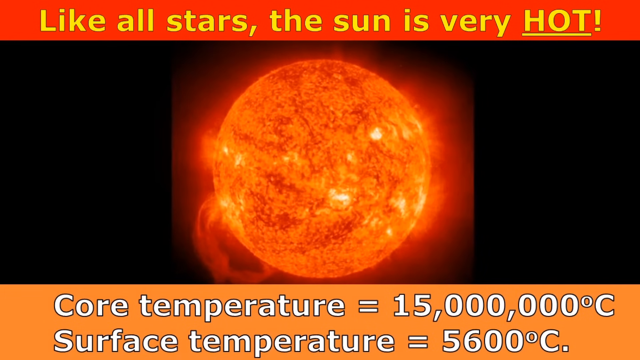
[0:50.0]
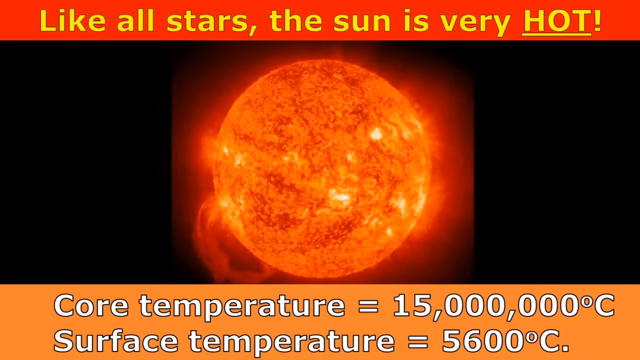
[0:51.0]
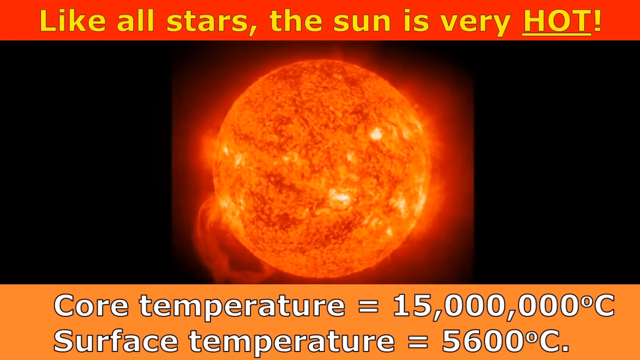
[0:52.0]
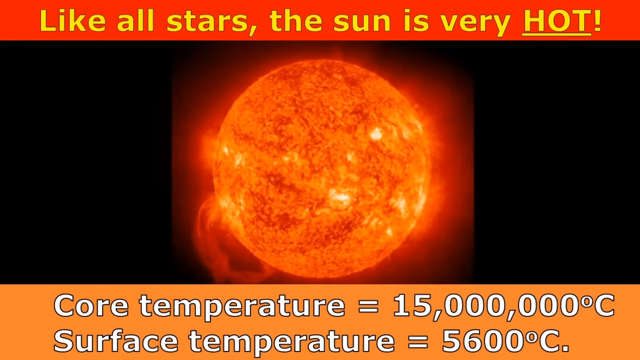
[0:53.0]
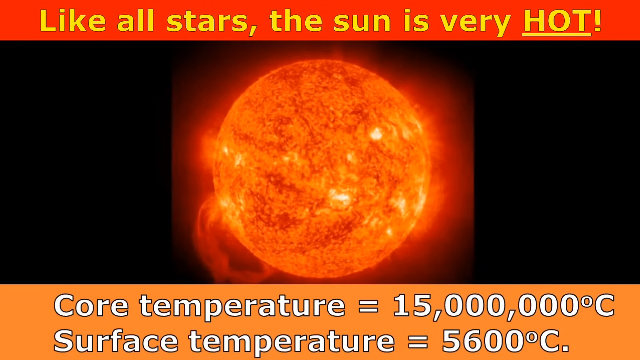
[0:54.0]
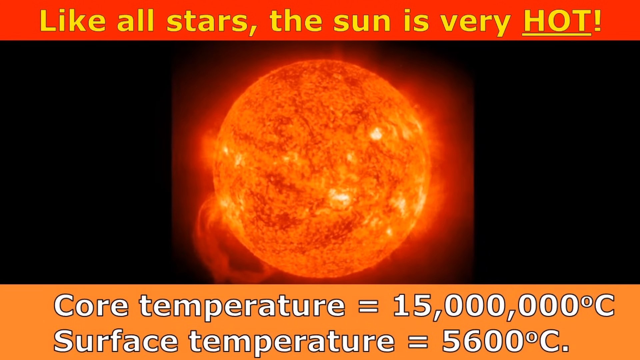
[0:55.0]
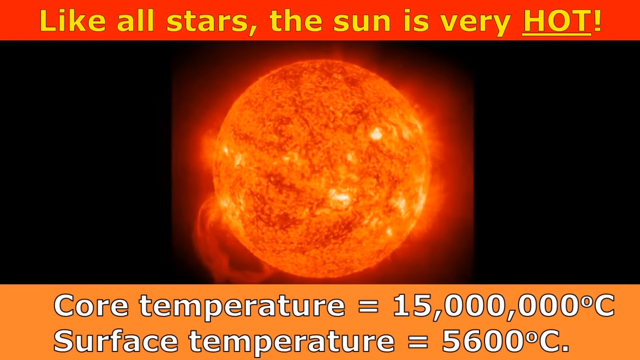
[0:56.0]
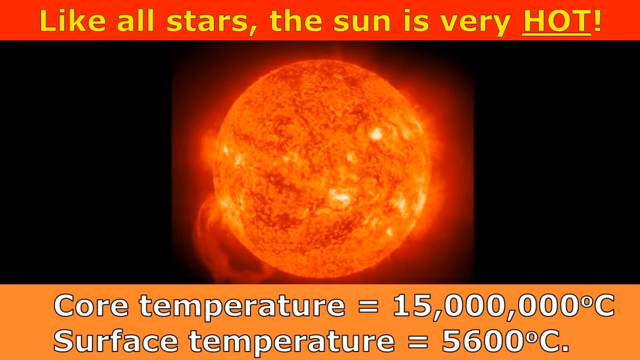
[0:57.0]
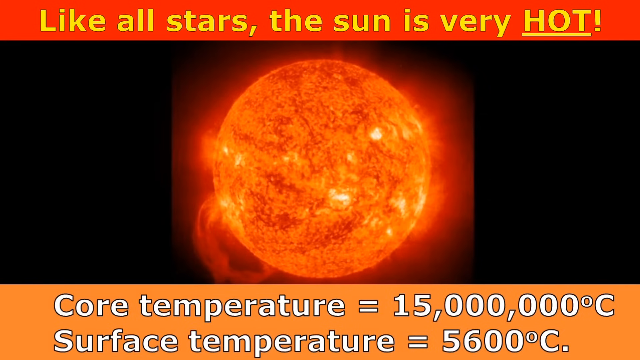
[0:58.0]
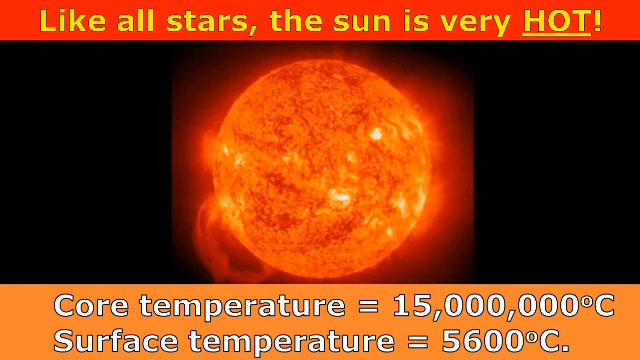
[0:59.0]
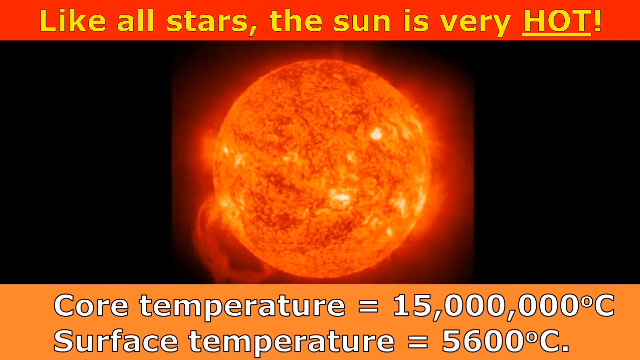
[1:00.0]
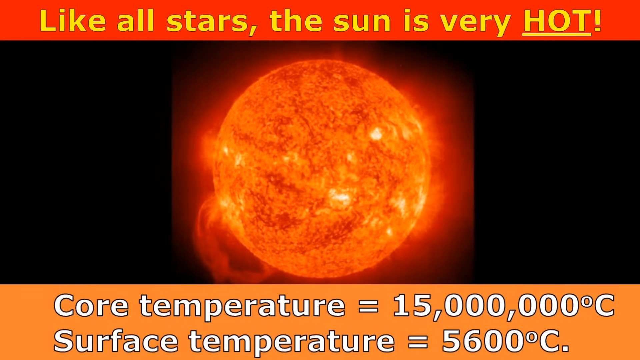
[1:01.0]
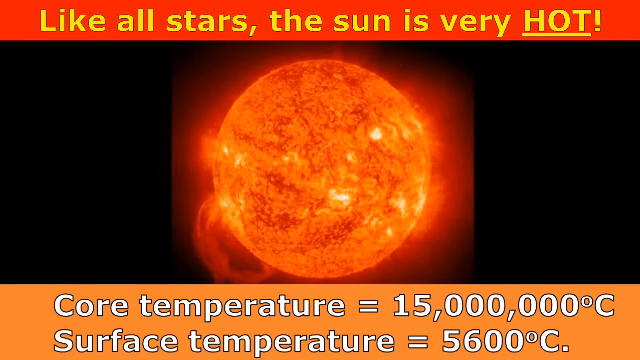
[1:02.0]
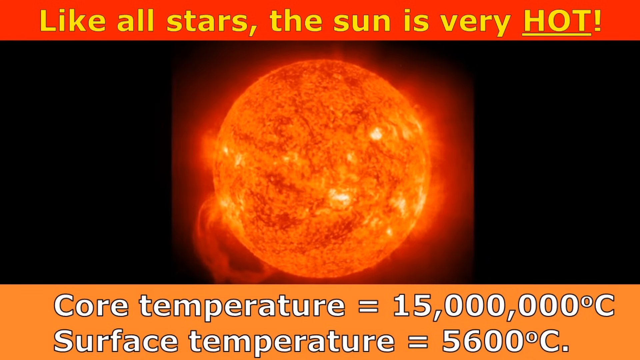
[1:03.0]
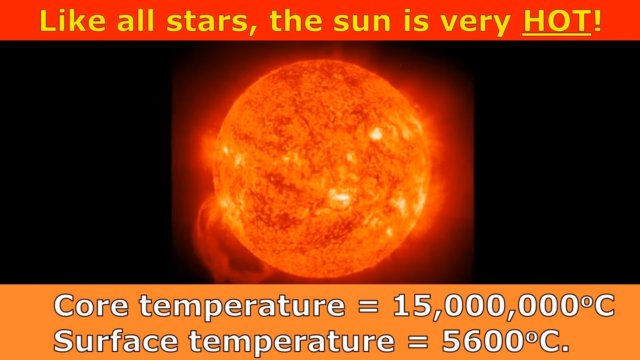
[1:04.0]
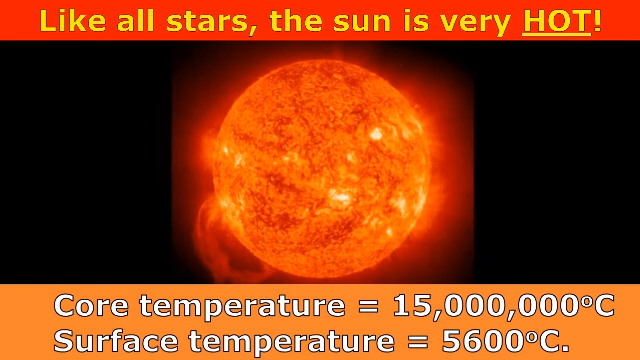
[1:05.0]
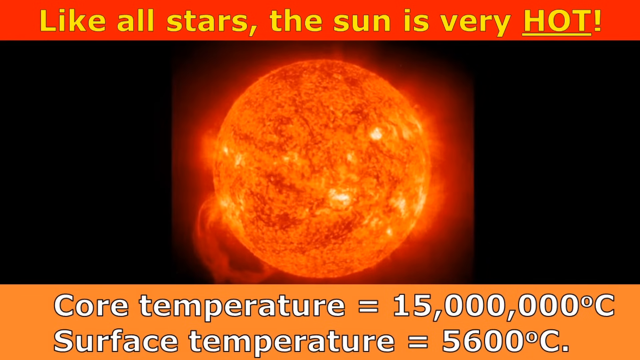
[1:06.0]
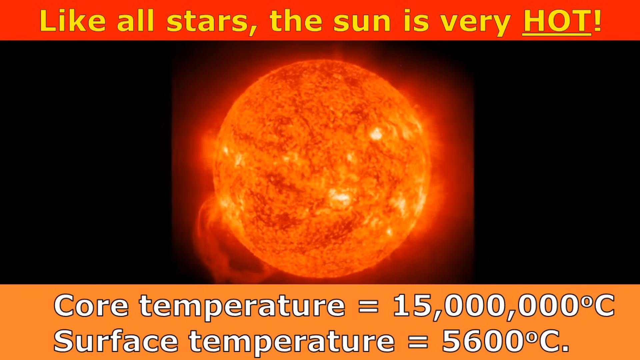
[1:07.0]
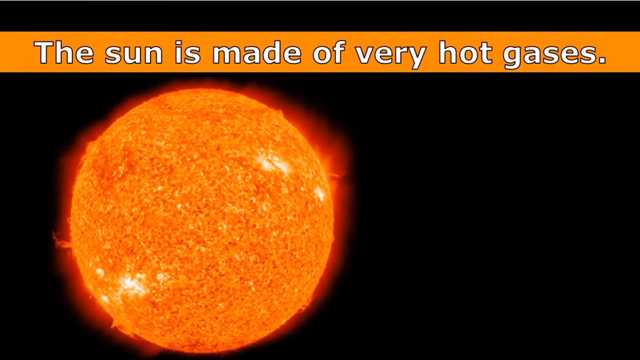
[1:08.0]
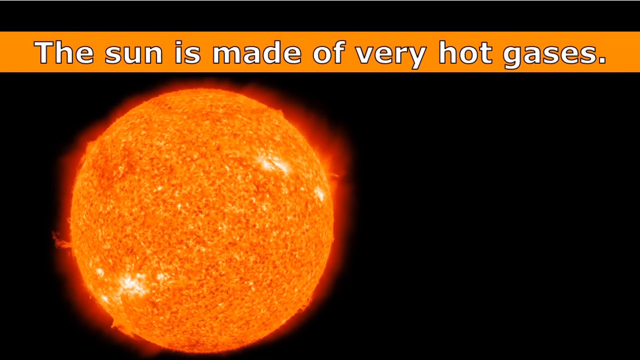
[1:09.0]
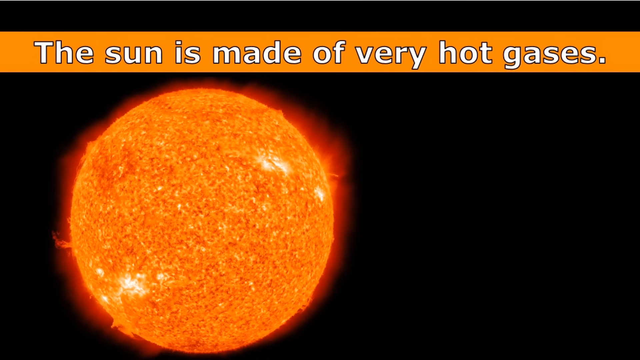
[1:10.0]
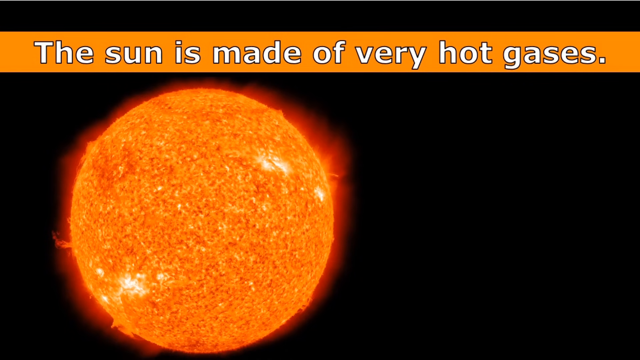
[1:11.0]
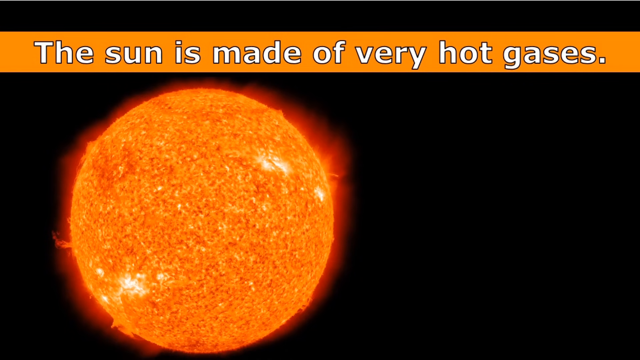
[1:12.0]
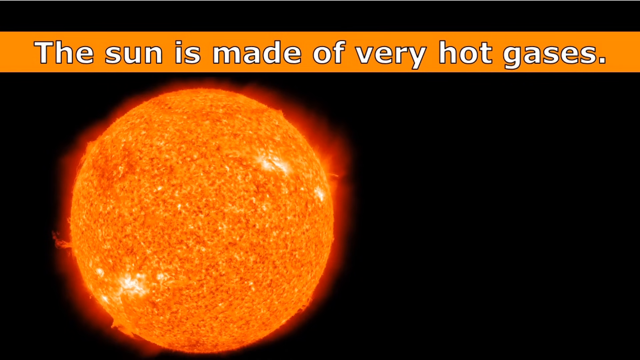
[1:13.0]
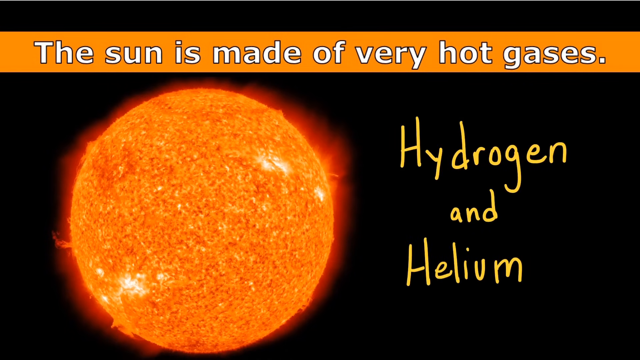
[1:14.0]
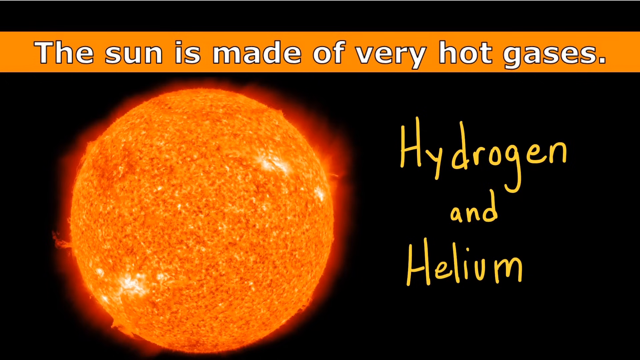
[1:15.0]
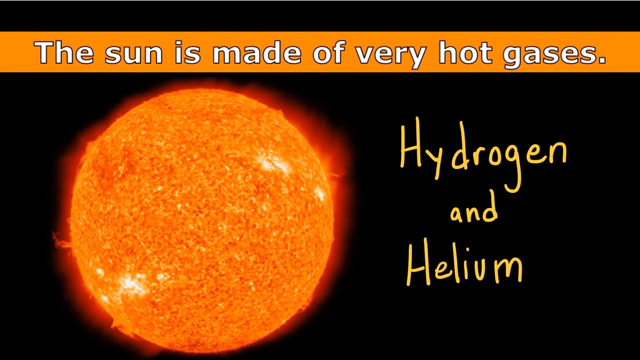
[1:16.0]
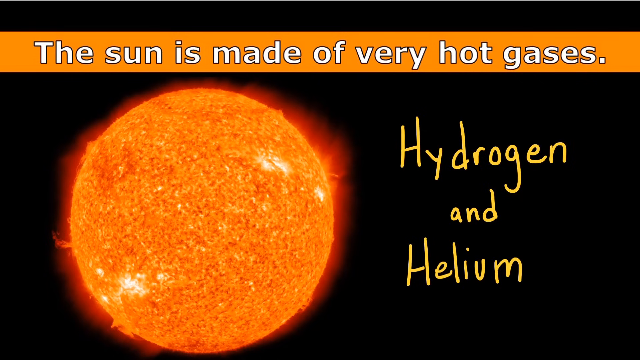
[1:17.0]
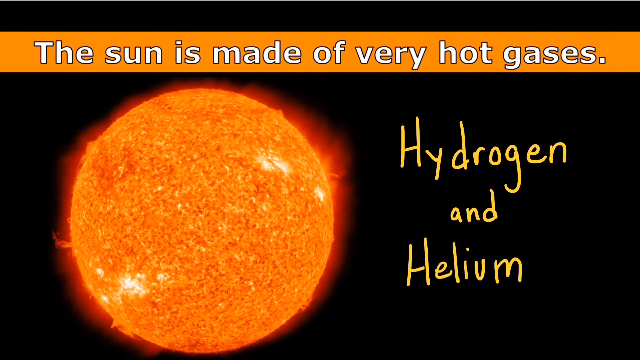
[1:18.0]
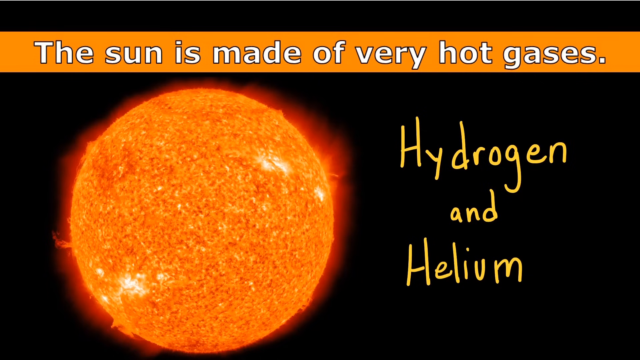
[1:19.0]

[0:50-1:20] Yellow text appears at the top on a red horizontal background, reading "like all stars the Sun is very HOT," with "hot" in capitals and underlined. At the bottom, white text on an orange horizontal background reads "the core temperature equals 15 million degrees Celsius and the surface temperature is 5,600 degrees Celsius." The video then transitions to another screen with white text at the top on an orange horizontal background reading "The Sun is made of very hot gases," with the sun on the left glowing very brightly against a black background.